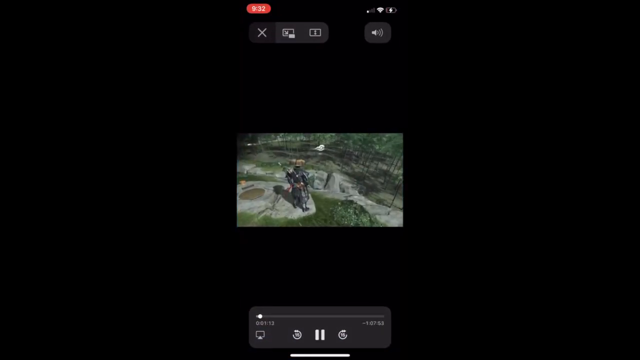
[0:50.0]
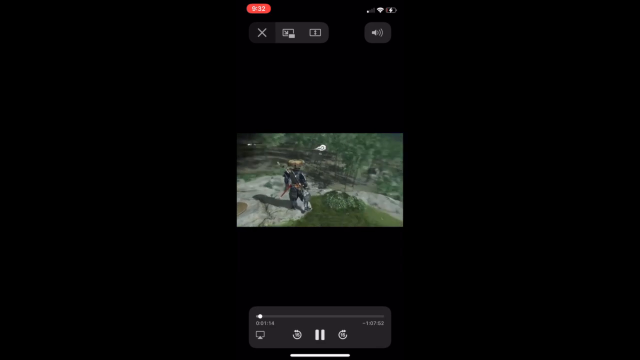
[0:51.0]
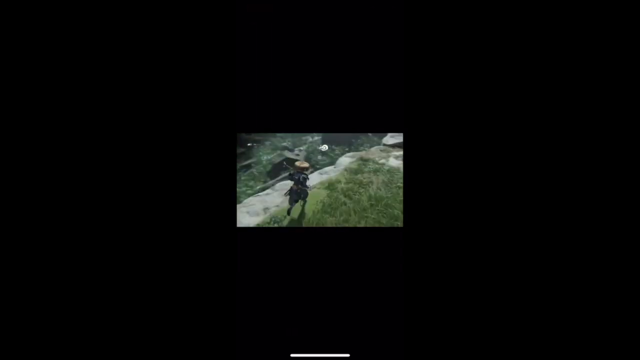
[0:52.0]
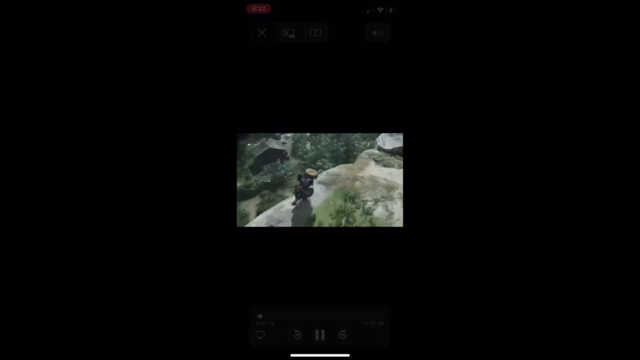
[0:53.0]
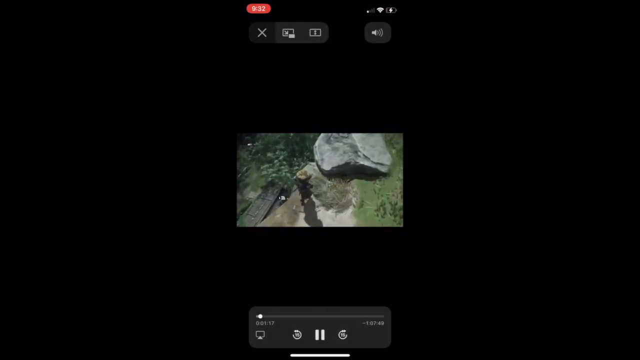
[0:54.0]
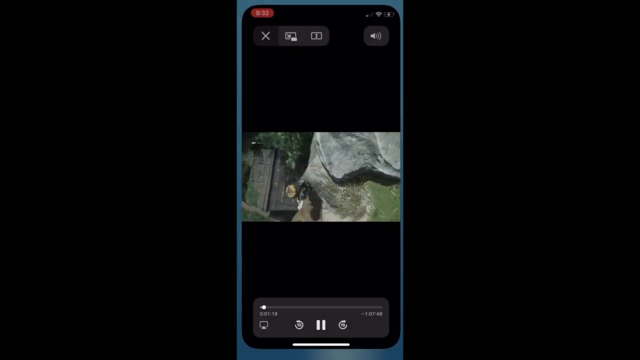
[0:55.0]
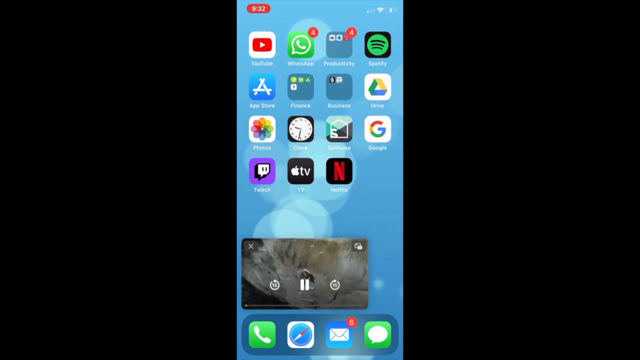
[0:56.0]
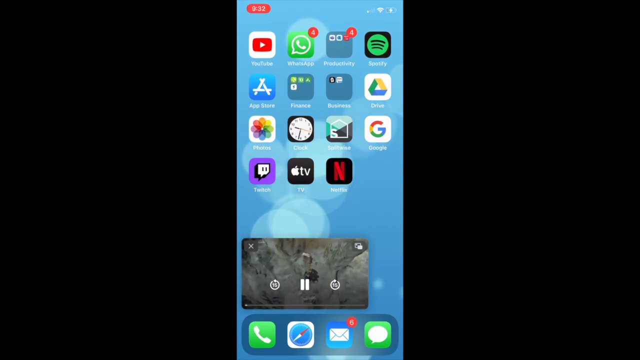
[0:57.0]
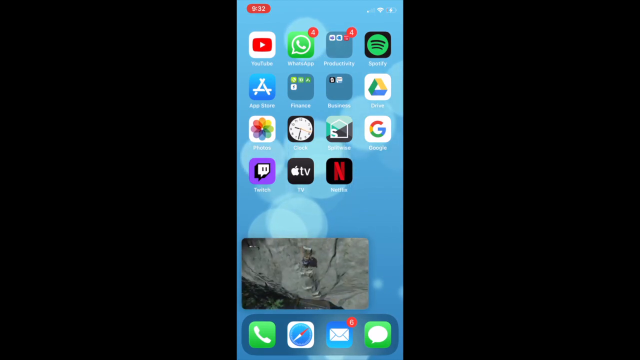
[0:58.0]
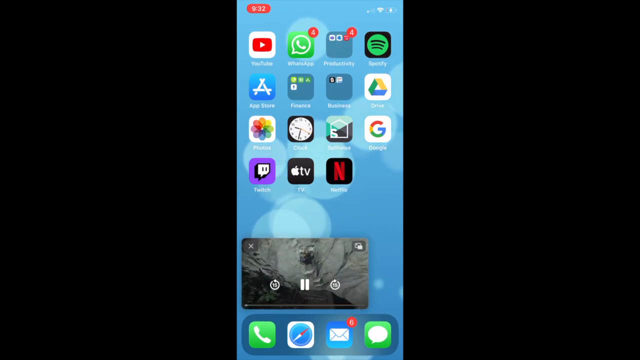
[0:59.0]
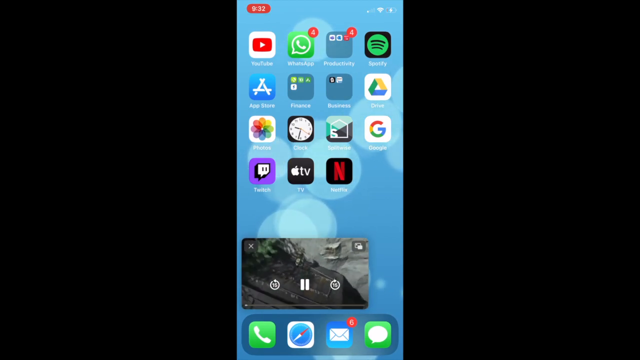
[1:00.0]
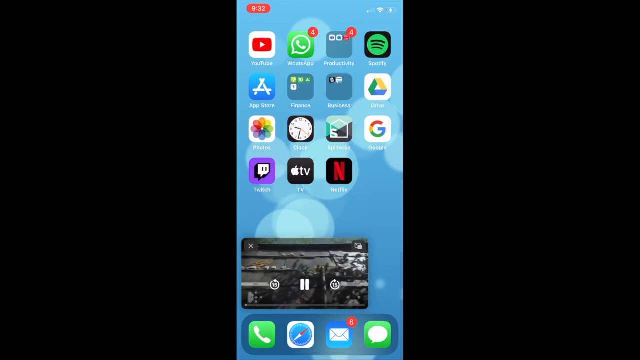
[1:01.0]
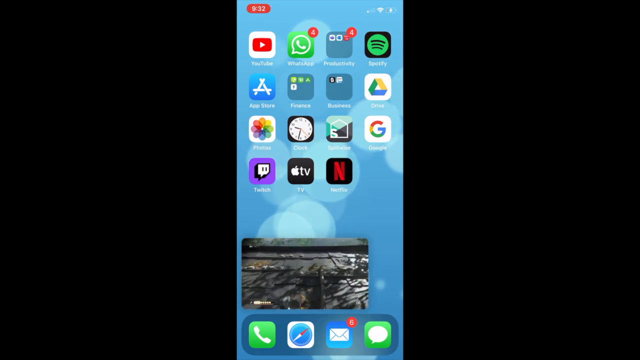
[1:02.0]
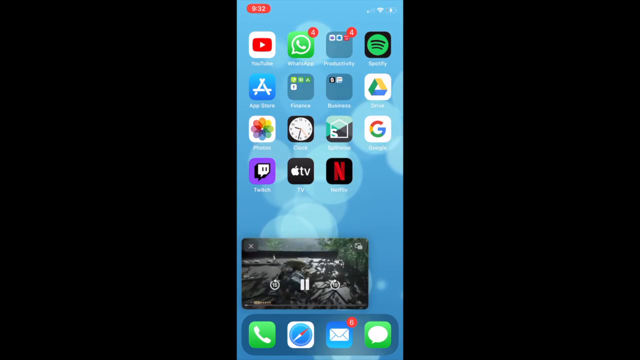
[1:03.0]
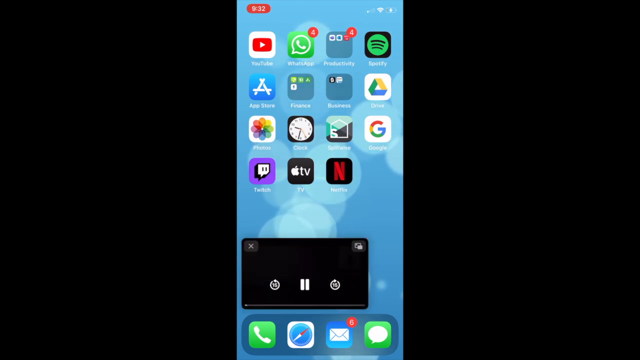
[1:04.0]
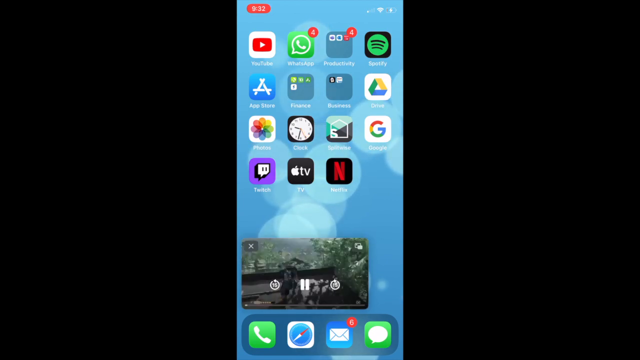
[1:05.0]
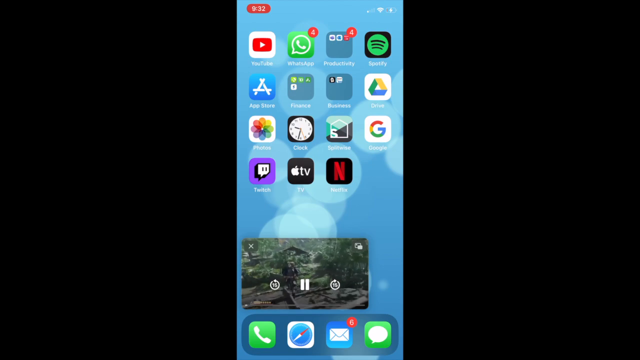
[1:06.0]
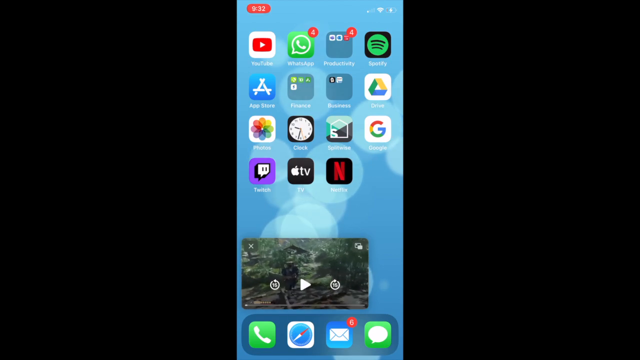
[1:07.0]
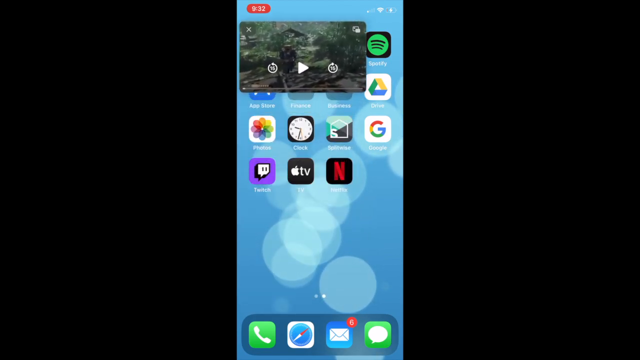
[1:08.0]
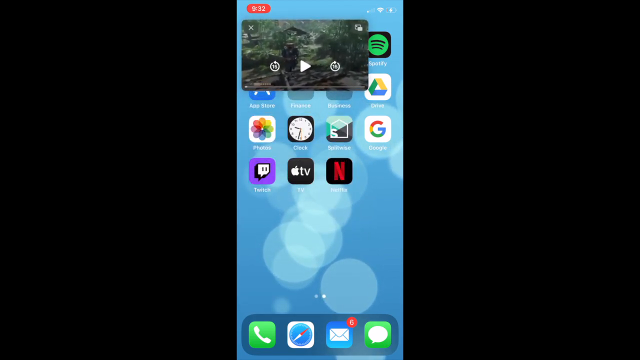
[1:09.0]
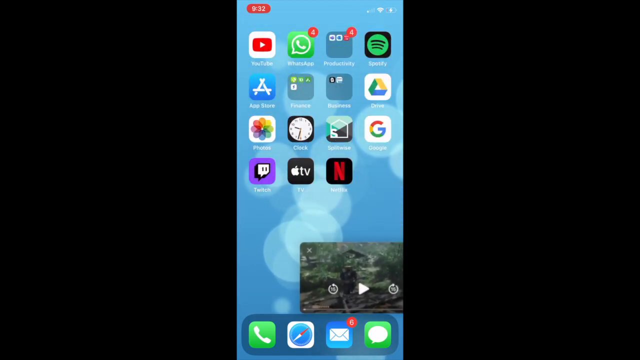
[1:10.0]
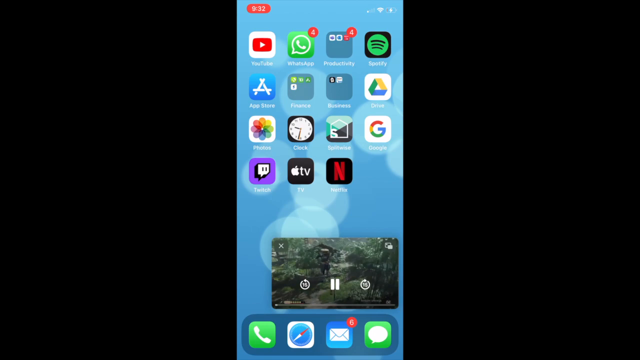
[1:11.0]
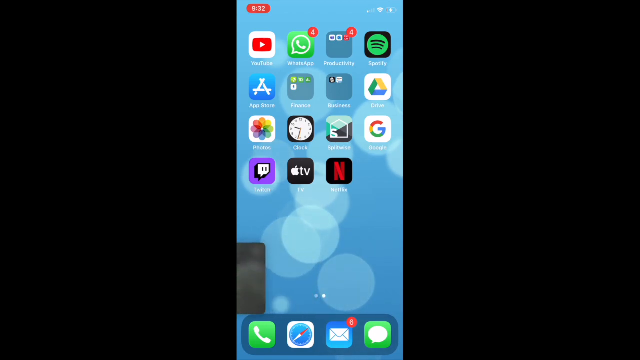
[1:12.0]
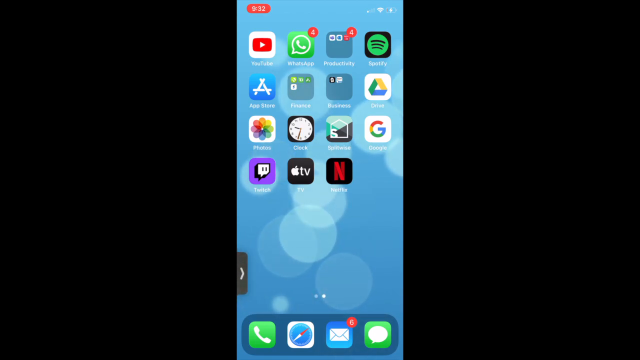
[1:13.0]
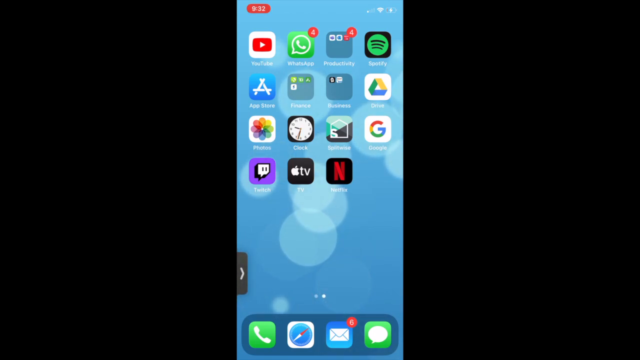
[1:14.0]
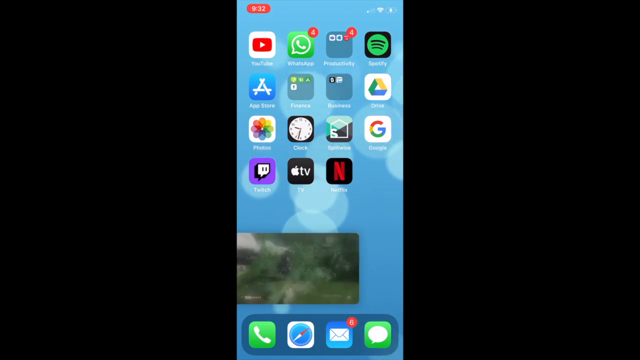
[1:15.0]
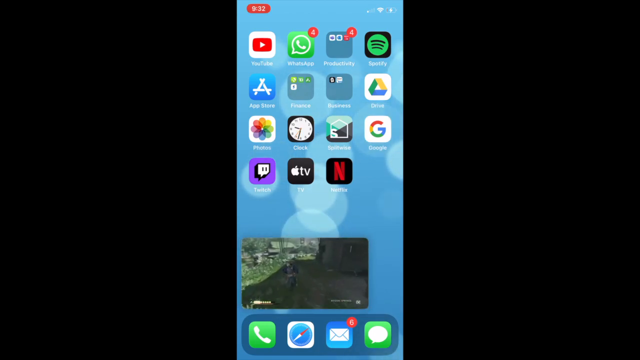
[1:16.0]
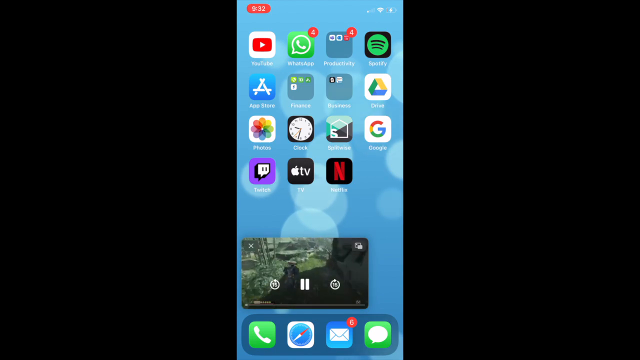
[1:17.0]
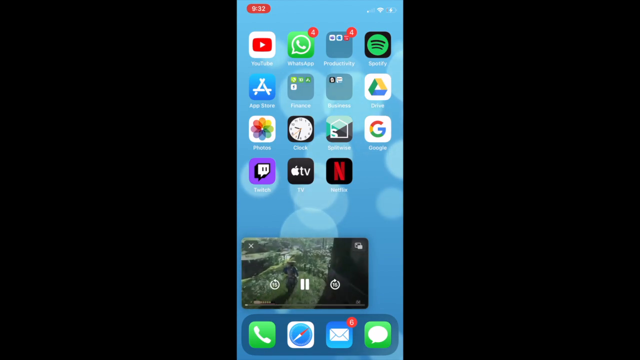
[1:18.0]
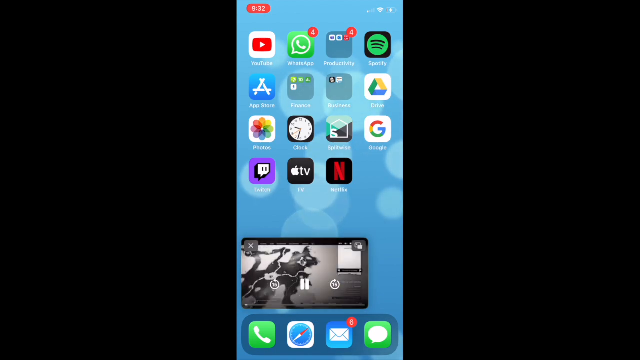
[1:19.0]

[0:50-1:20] The video keeps playing, showing a character running around in a video game. The user shrinks it into a windowed version, so the video is still on the iPhone while the home screen is displayed, and the character is still seen running around. A play button and 15-seconds-forward and 15-seconds-back buttons are visible on top of the video. The user pauses the video, moves the small window to the top of the screen and back to the bottom, and then plays it again. They push it to the left off the screen, where a little arrow indicates a video is off screen there, then pull it back onto the home screen, showing the video game again. The game video switches to a menu screen, and at the very end the video is opened back up to full size.